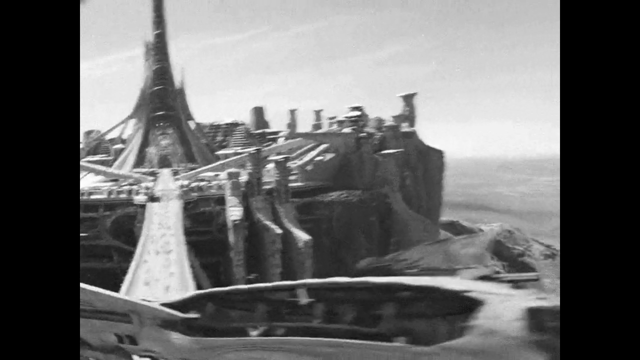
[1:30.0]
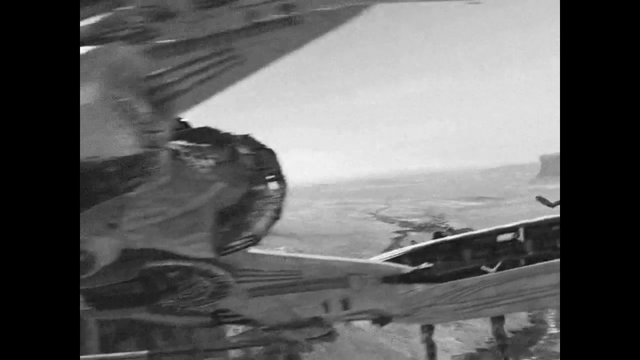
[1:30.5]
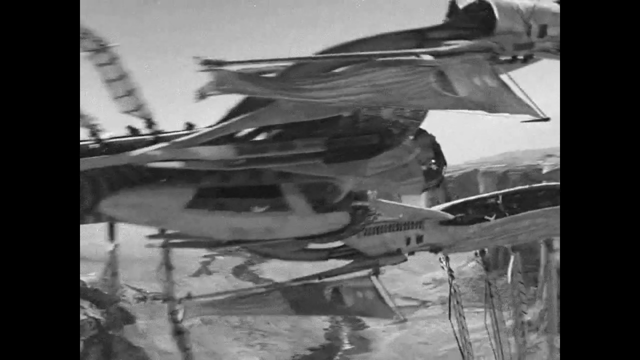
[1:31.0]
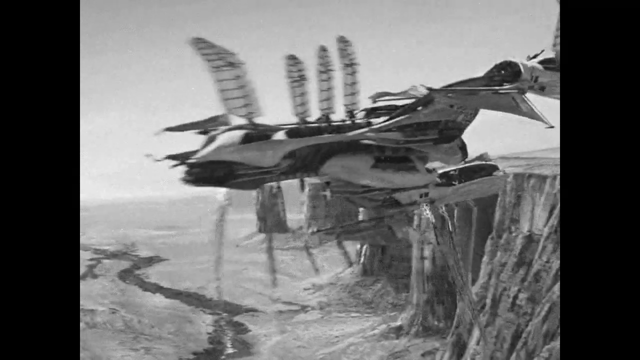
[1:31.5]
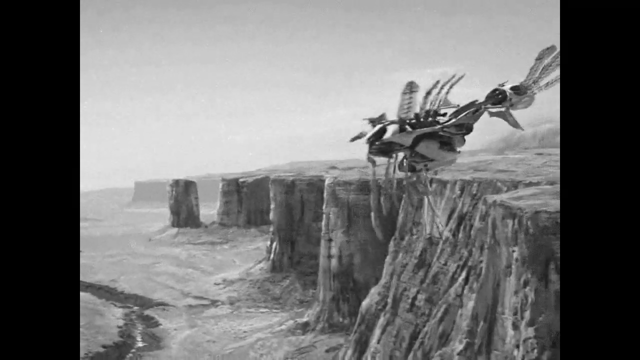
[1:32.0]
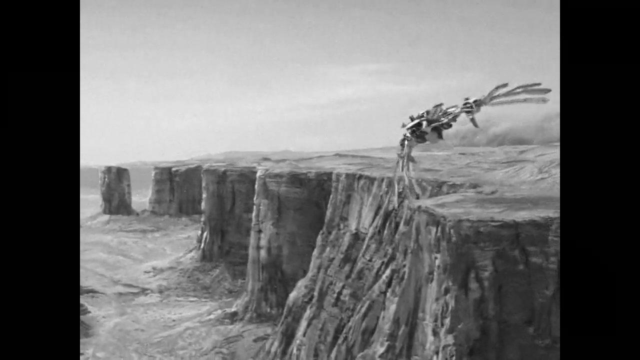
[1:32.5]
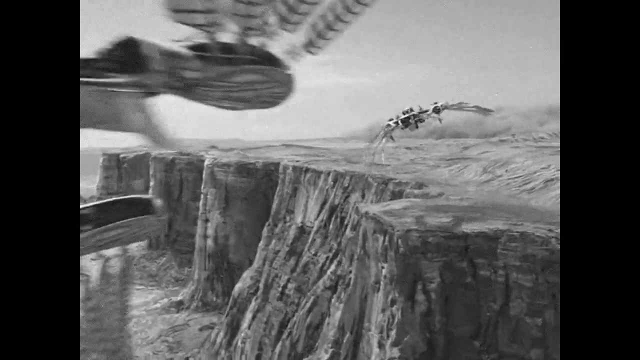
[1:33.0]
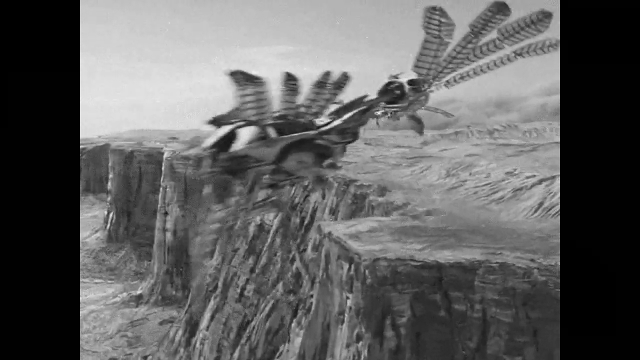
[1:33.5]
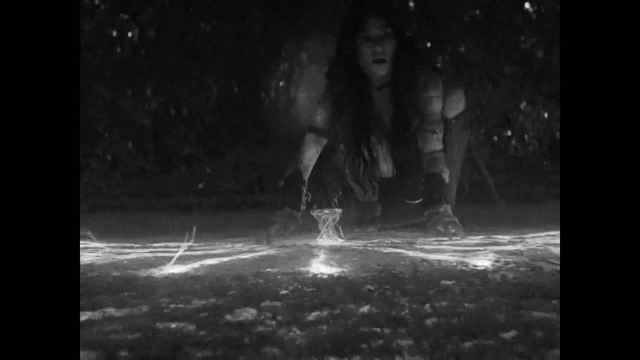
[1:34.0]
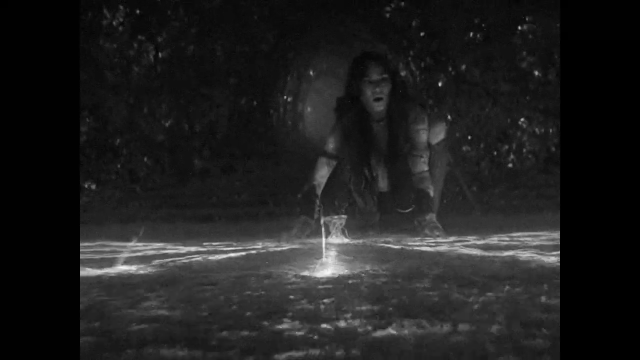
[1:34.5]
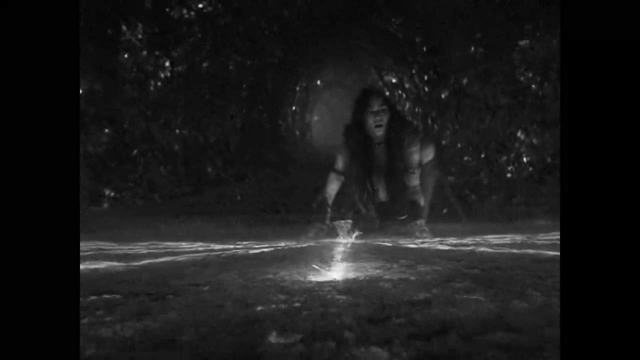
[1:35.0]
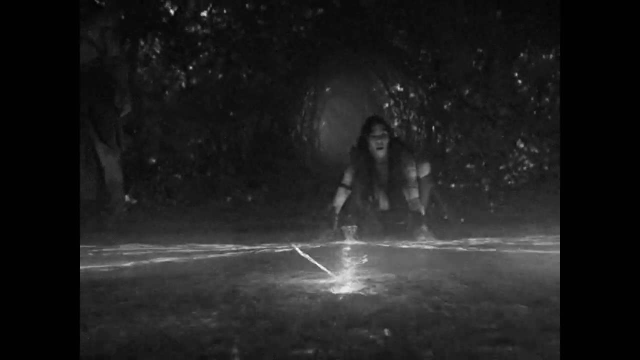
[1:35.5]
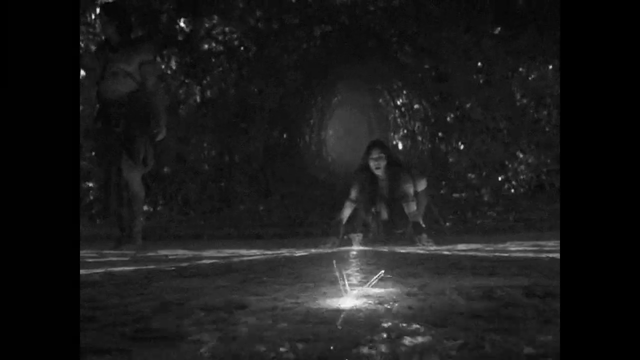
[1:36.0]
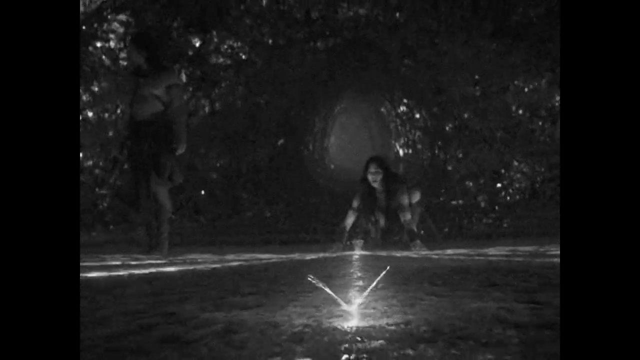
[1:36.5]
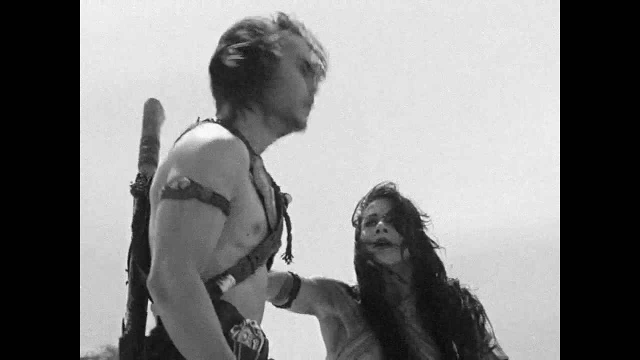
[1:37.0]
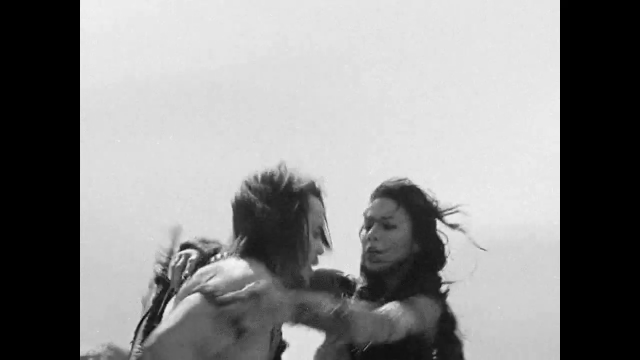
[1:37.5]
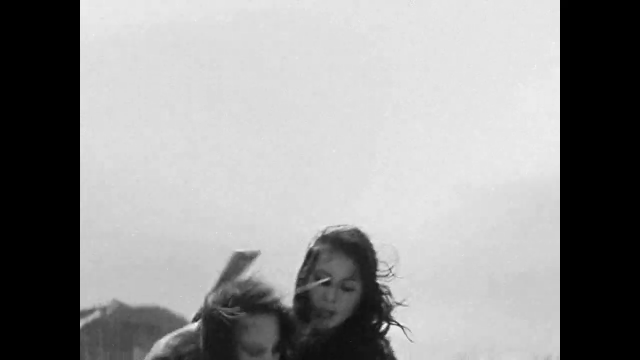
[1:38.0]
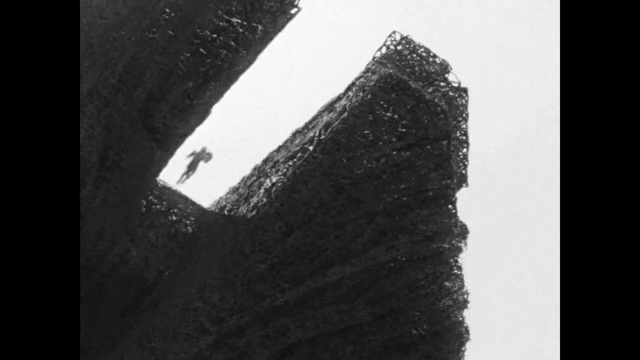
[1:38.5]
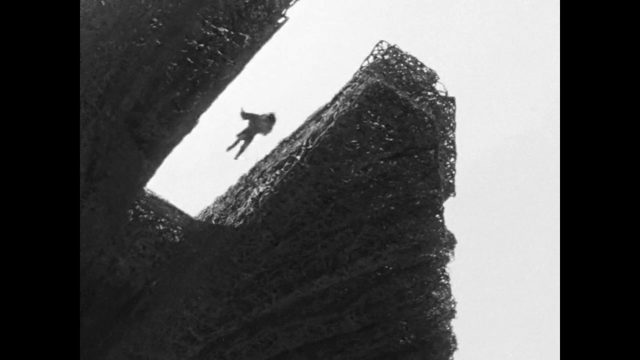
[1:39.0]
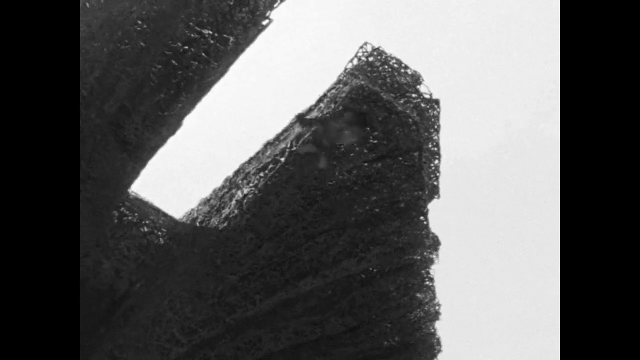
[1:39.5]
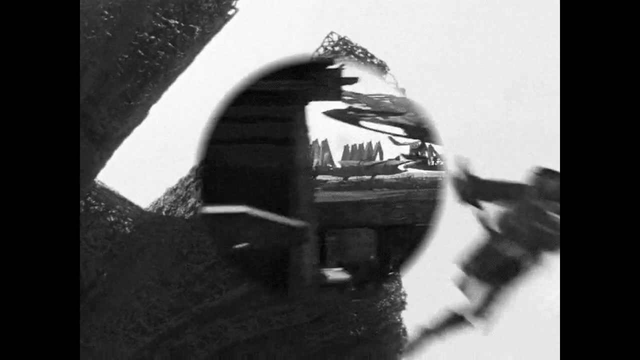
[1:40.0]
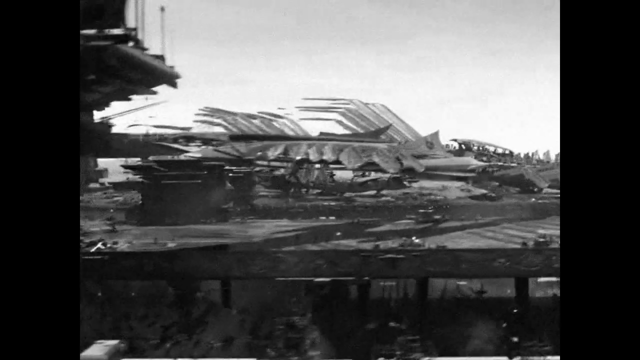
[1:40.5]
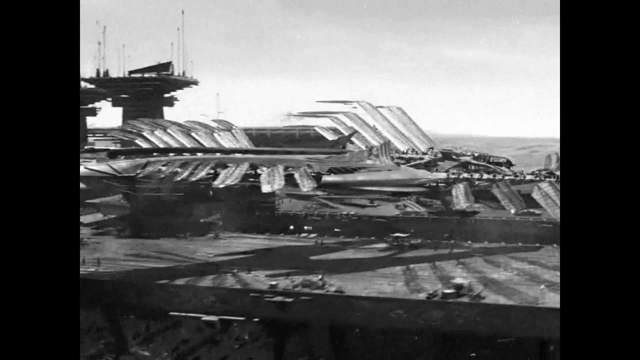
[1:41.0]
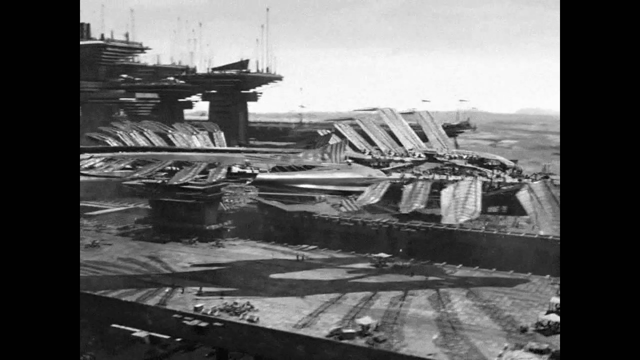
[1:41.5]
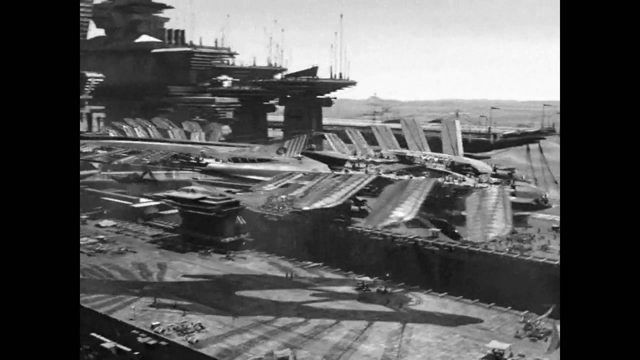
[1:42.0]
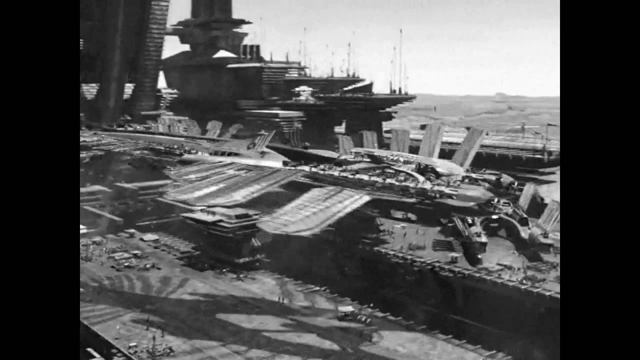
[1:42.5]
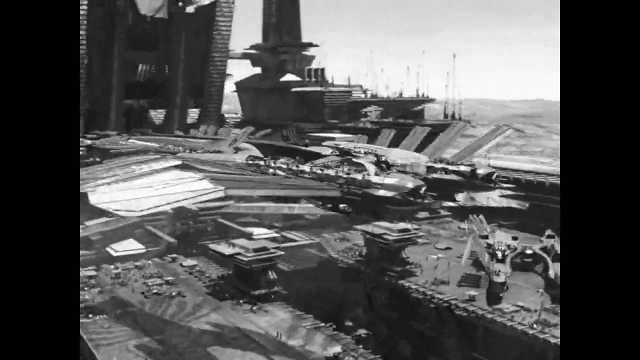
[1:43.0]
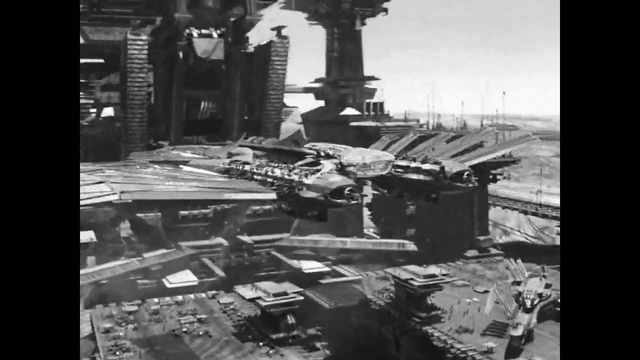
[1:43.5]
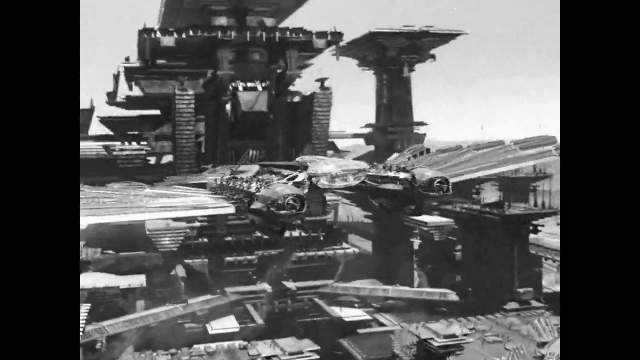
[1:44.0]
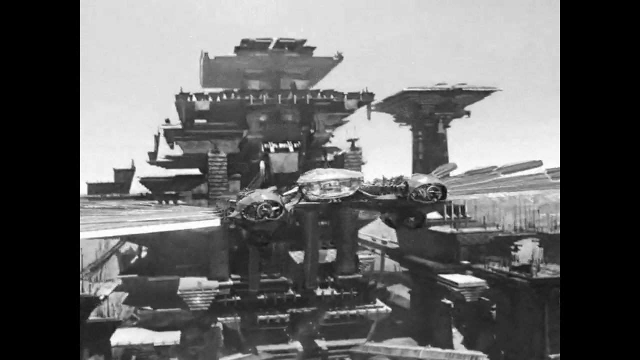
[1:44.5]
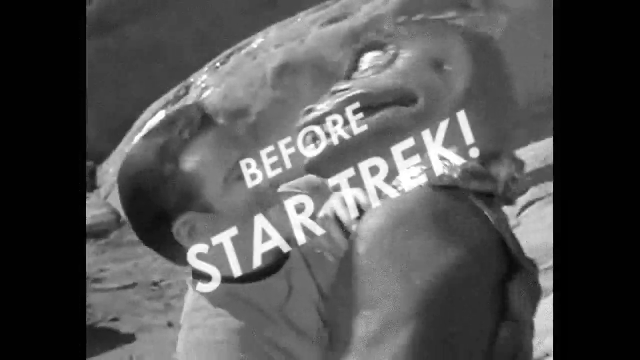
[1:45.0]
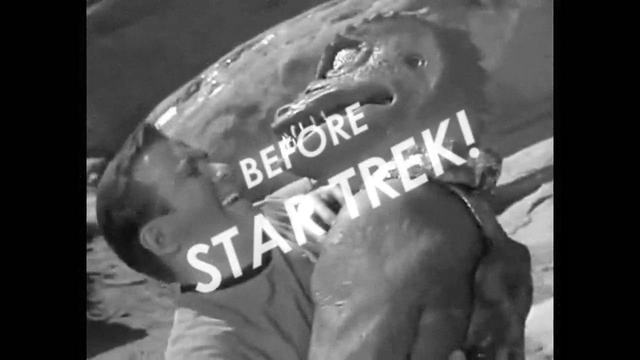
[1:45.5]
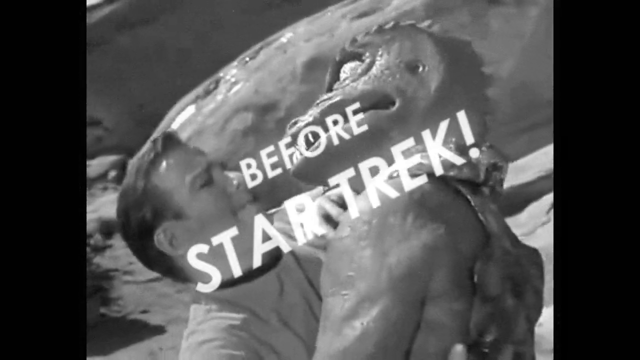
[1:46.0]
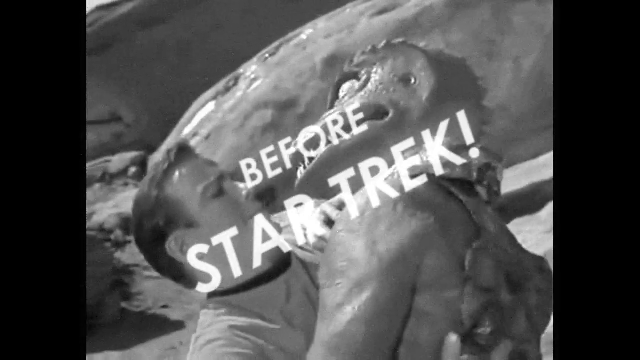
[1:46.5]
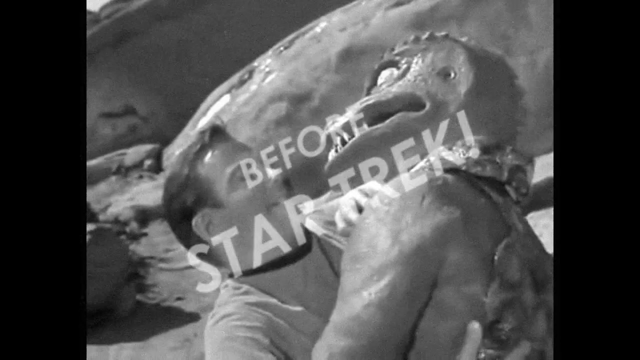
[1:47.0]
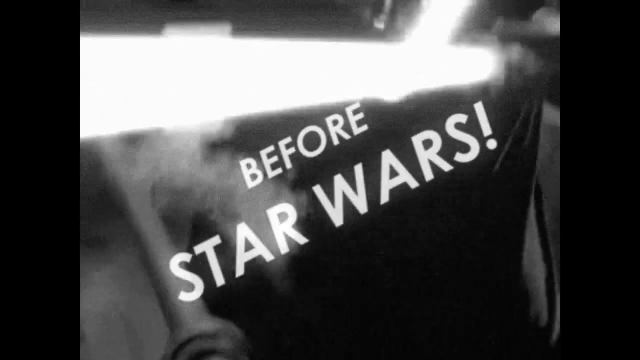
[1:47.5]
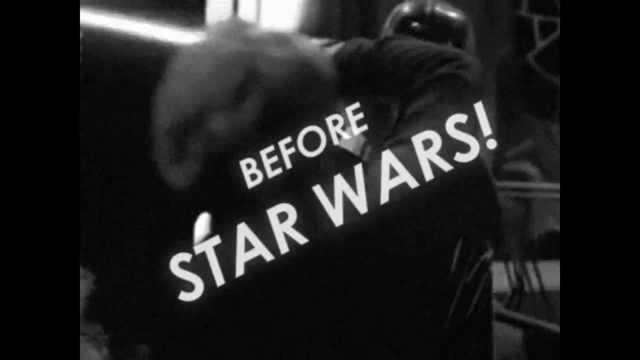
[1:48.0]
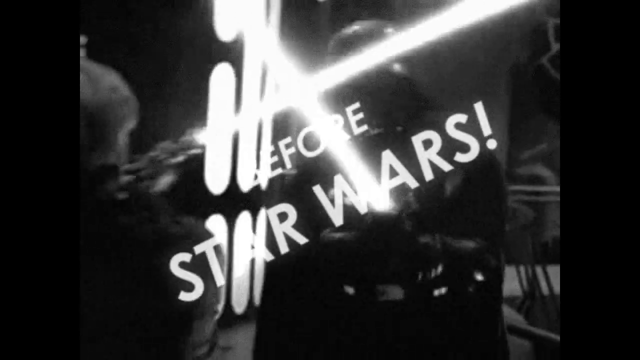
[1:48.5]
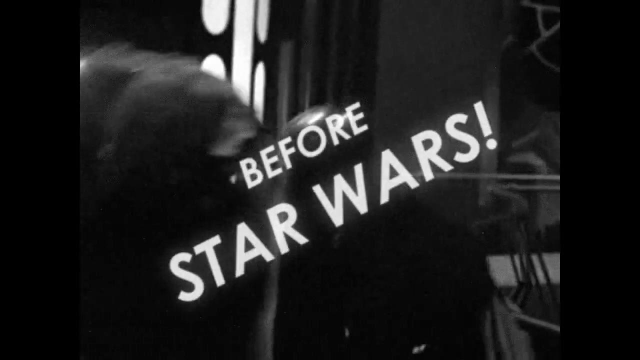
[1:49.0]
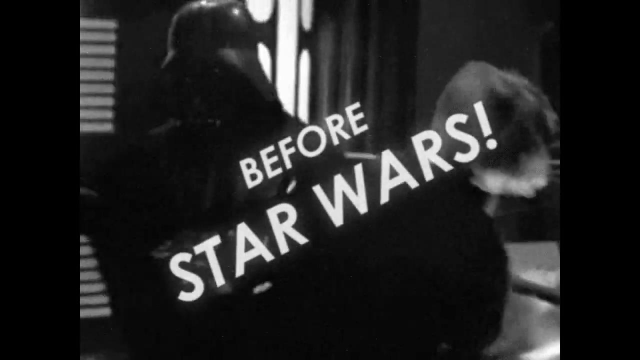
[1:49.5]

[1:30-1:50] A spaceship crosses to the other side, and another spaceship goes after it. A woman sends rays down to the ground, making something like a drawing. The woman is then with a man who holds her and jumps with her in his arms, protecting her. Another spaceship leaves the platform where it was standing. "Before Star Trek" appears with a Star Trek character and some kind of strange beast or animal. Then "BEFORE STAR WARS" appears, and Darth Vader fights Skywalker with lightsabers. Everything is black and white, with no color, making it hard to see expressions or tell people from beasts.